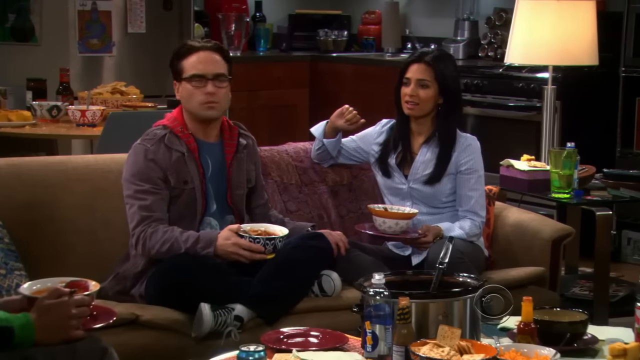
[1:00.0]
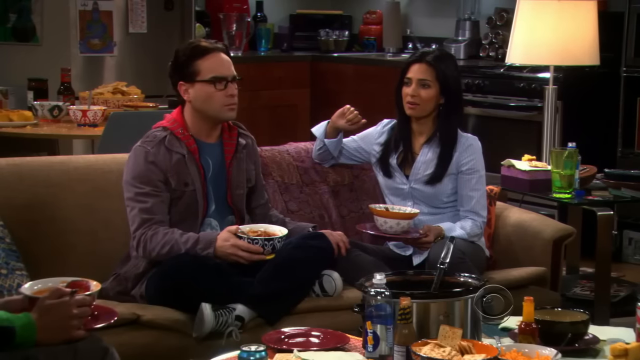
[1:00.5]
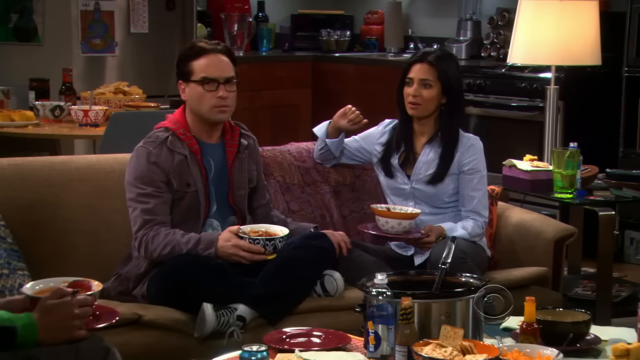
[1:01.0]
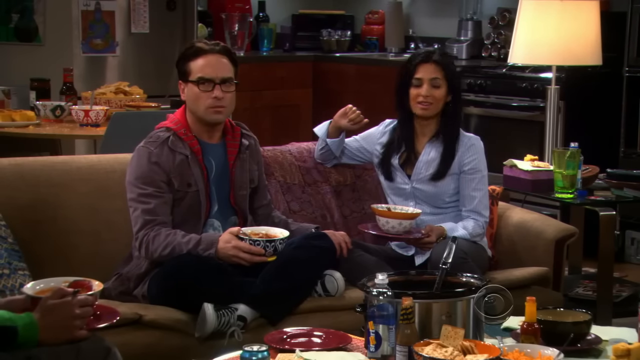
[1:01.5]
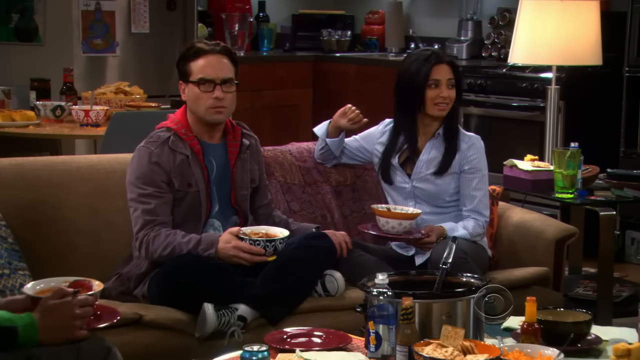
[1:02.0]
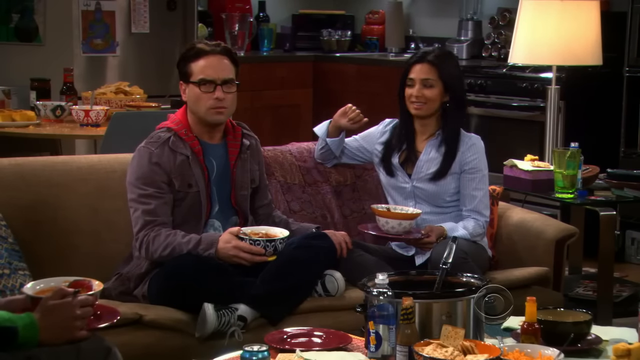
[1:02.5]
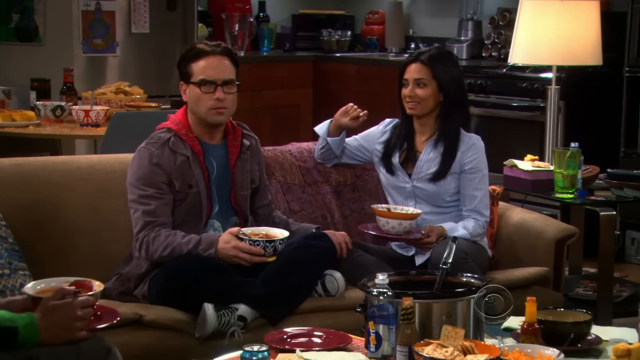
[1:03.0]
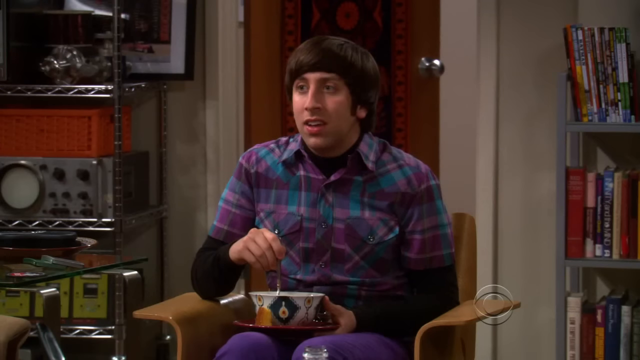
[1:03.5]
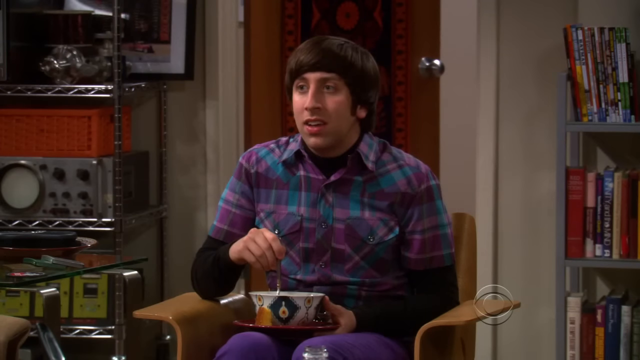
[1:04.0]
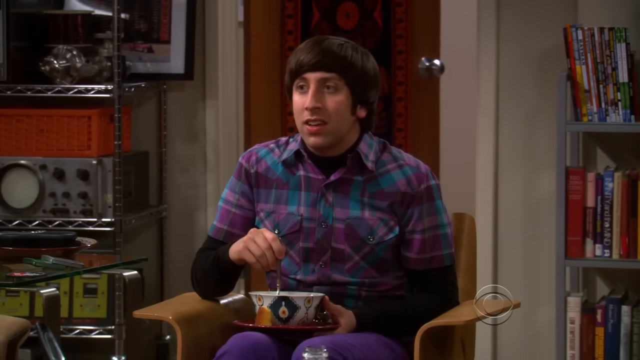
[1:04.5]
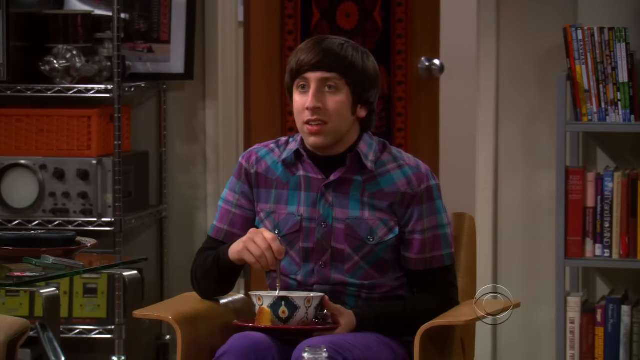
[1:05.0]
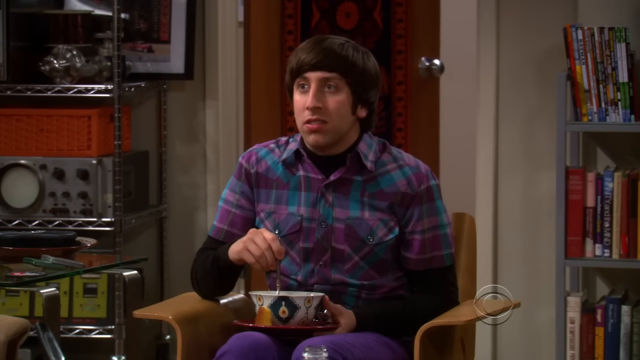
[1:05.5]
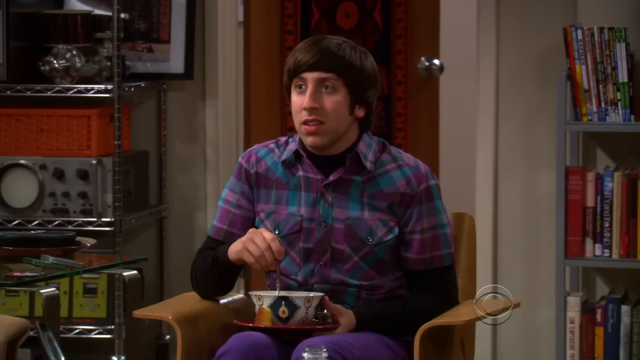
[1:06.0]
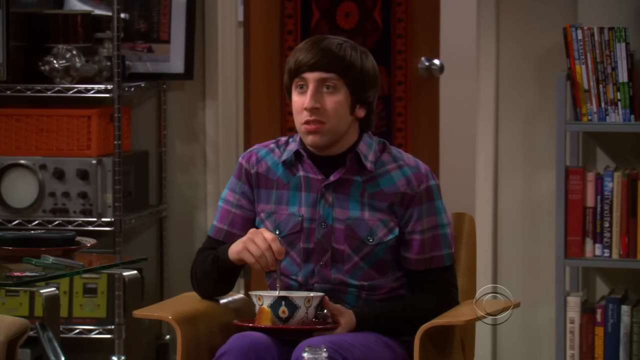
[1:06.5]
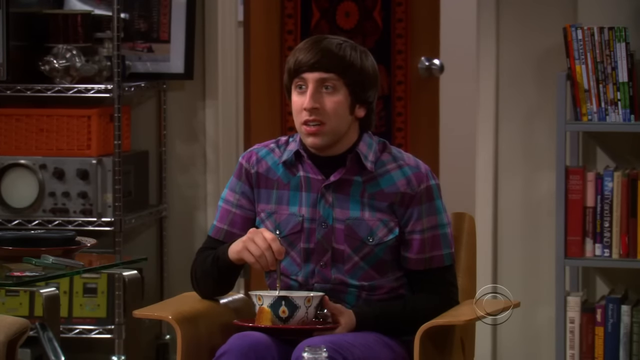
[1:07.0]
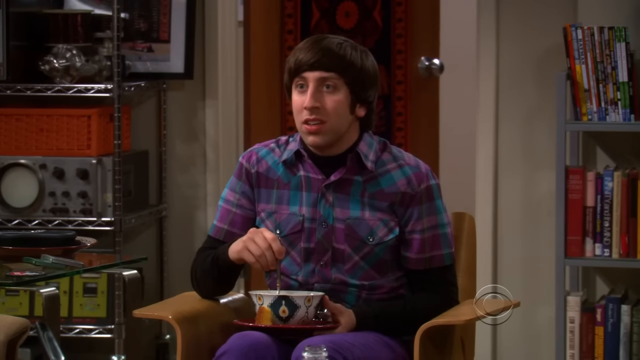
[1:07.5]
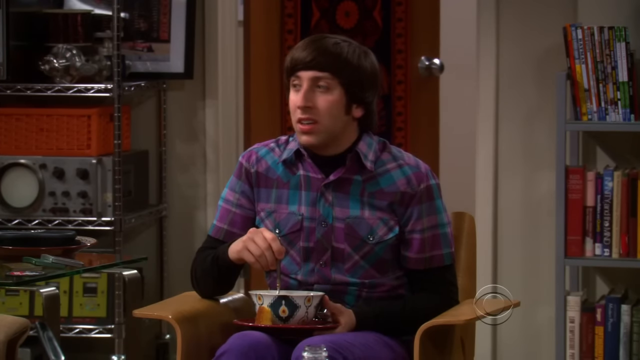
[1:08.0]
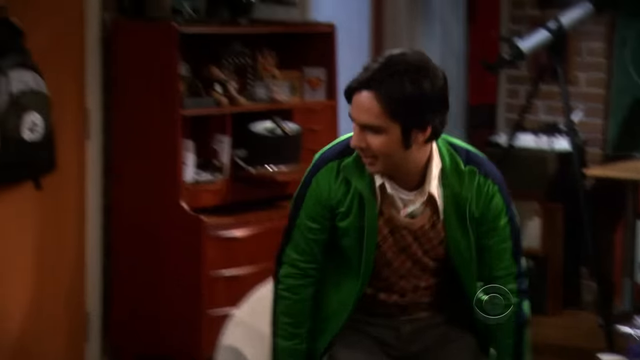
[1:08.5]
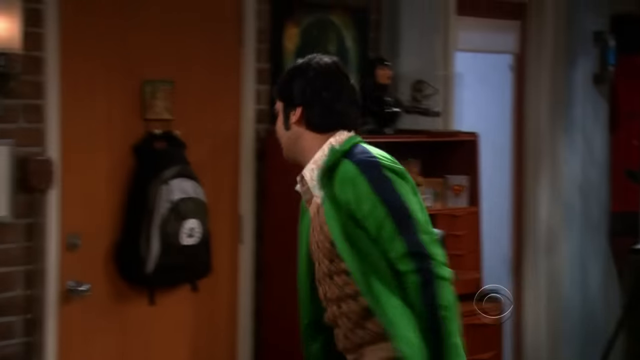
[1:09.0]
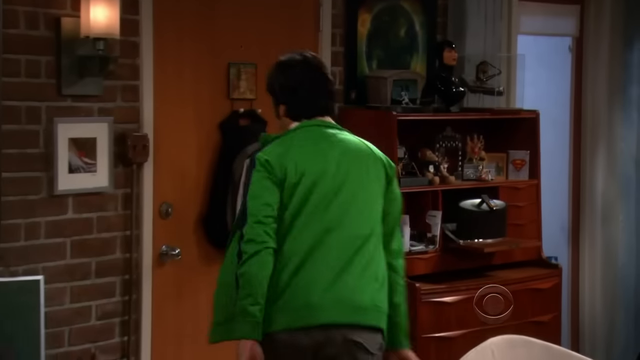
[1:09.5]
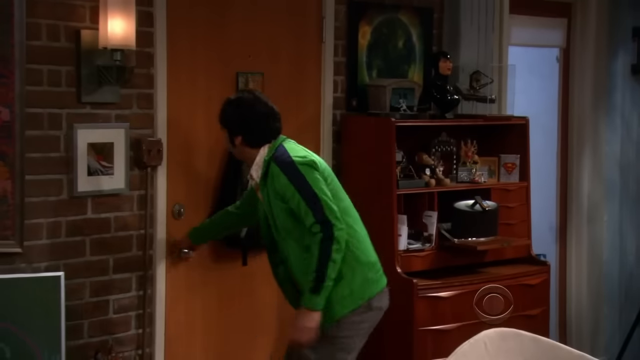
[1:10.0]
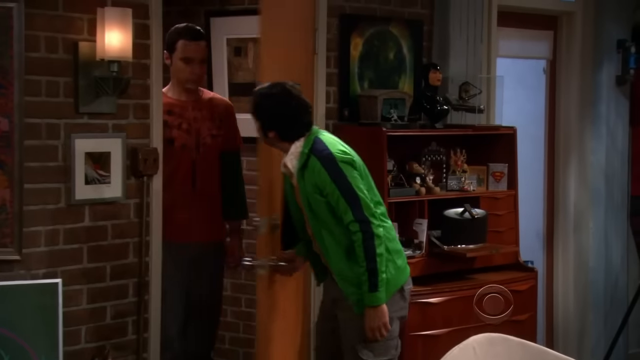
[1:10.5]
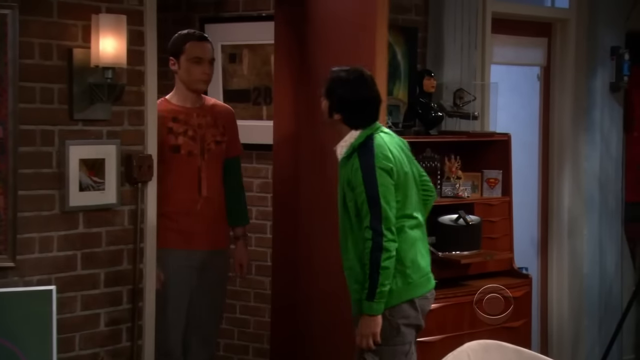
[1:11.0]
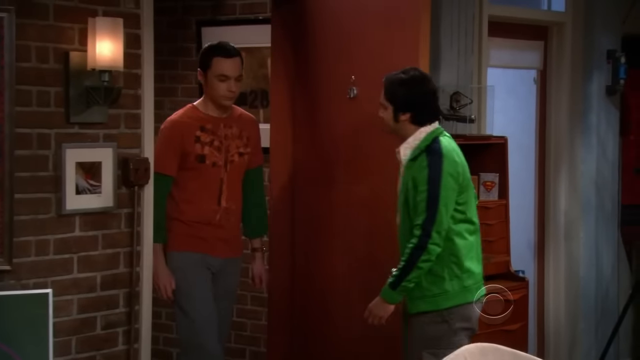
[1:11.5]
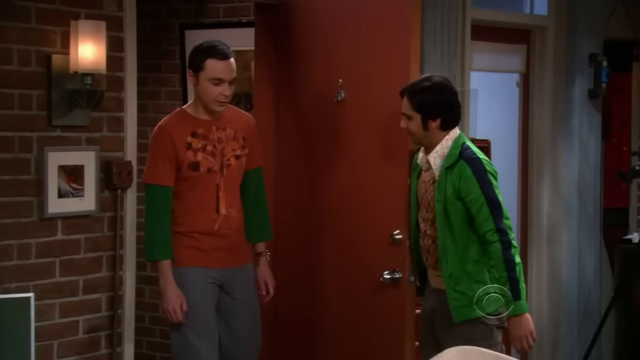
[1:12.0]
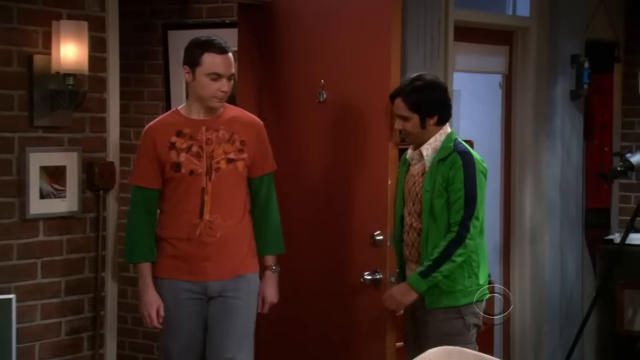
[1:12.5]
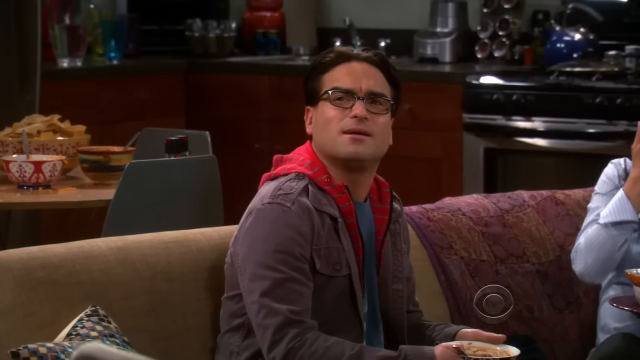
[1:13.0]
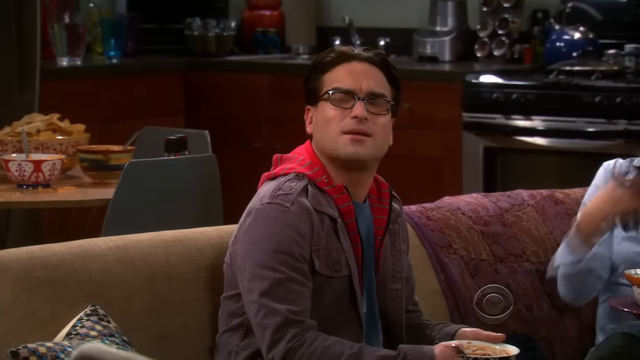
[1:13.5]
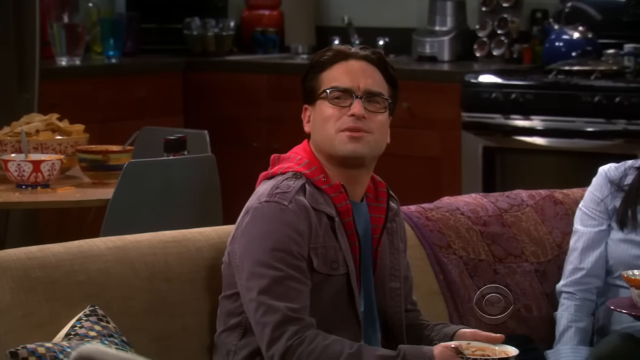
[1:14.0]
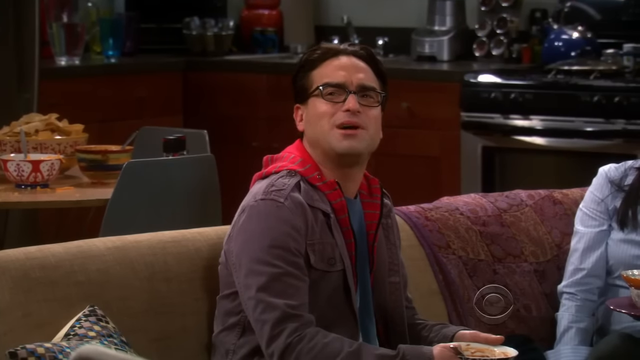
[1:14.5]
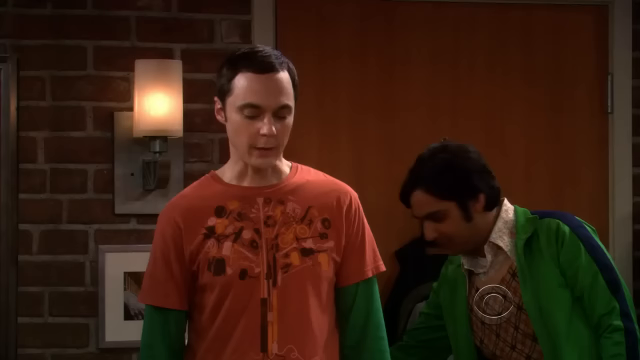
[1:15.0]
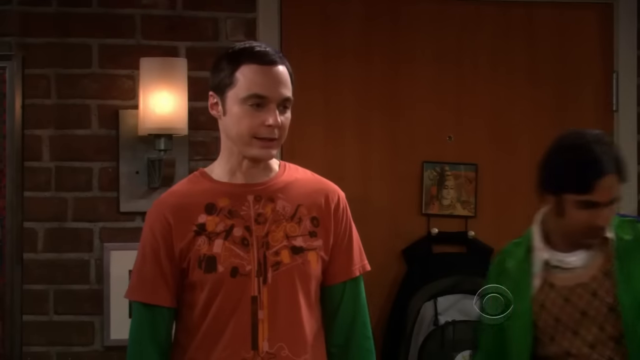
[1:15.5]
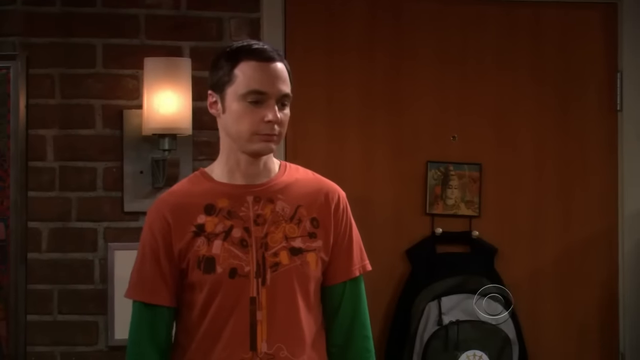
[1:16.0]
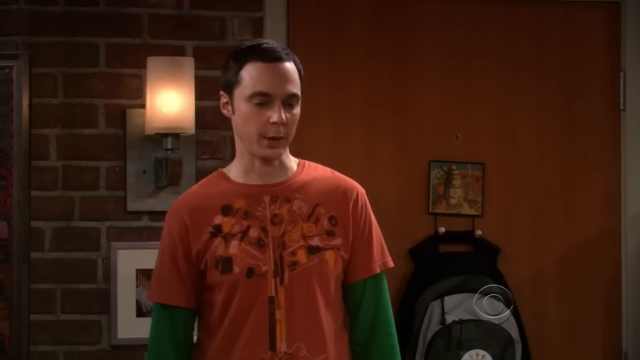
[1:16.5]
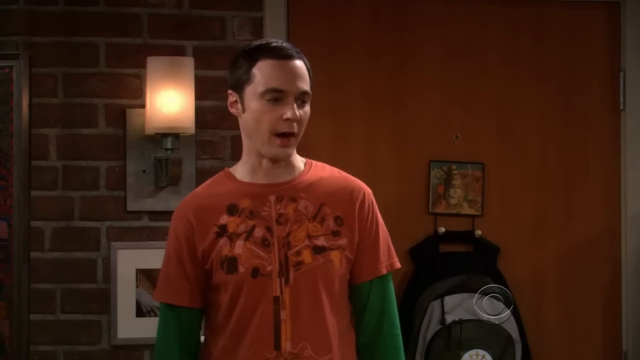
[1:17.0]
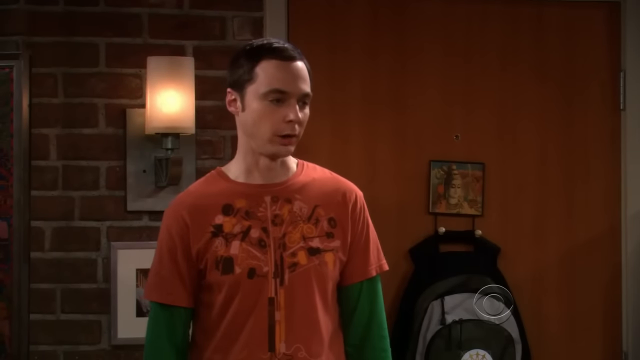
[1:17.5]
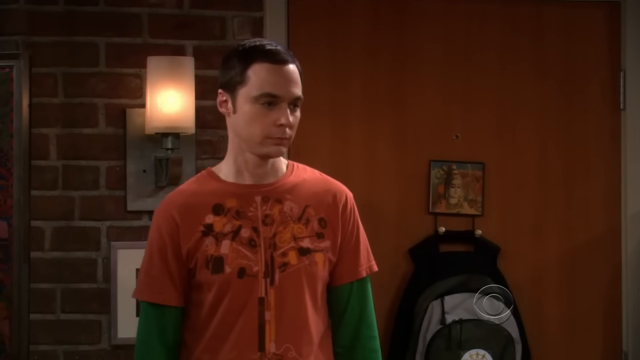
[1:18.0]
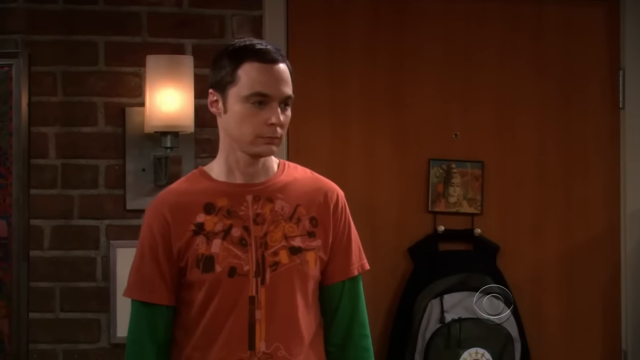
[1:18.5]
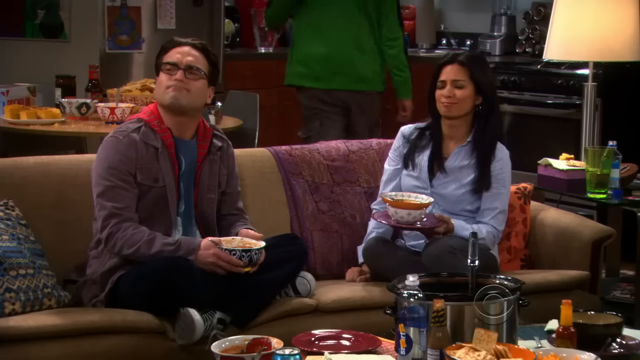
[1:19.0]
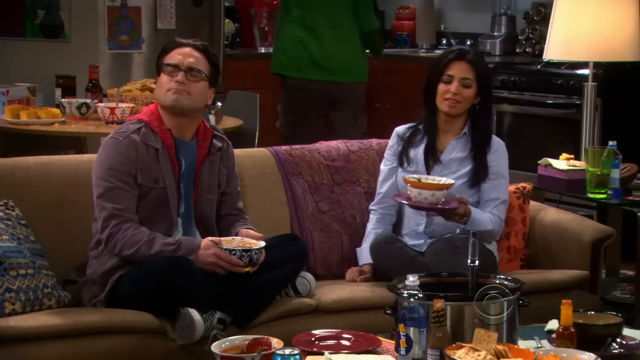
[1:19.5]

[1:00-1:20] They are all sitting down; Howard is in the chair eating his bowl of soup. Raj gets up and opens the door, and Sheldon comes in and says hi to Raj. Leonard looks sort of in awe or shocked as he comes in, and Howard also looks shocked, seemingly wondering what Sheldon is doing there. Sheldon talks to Leonard and Raj's girlfriend. Pictures hang on the wall behind Leonard, along with a lamp behind him, and the wall is sort of a brick wall.